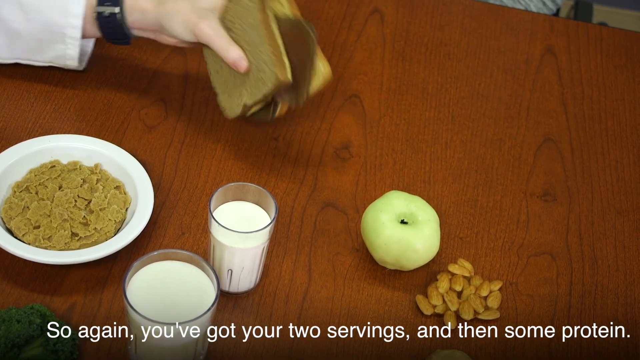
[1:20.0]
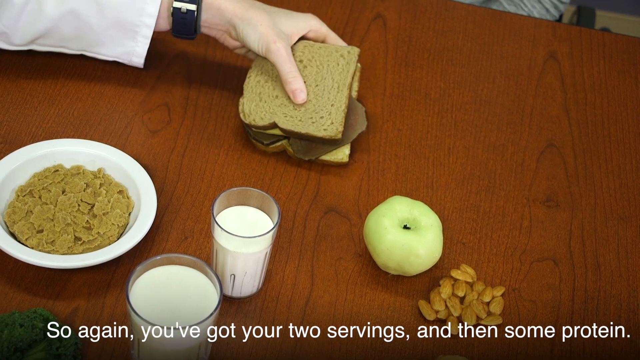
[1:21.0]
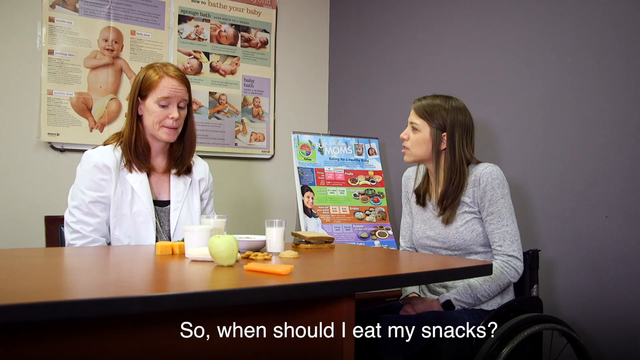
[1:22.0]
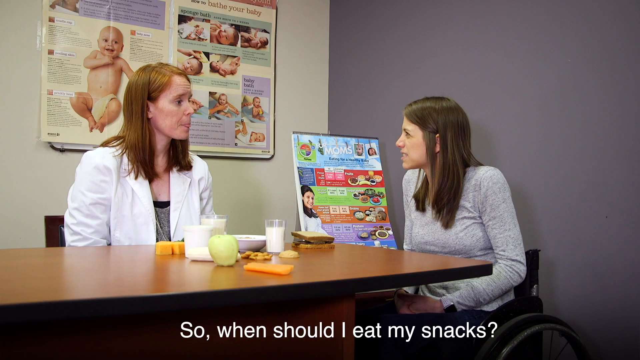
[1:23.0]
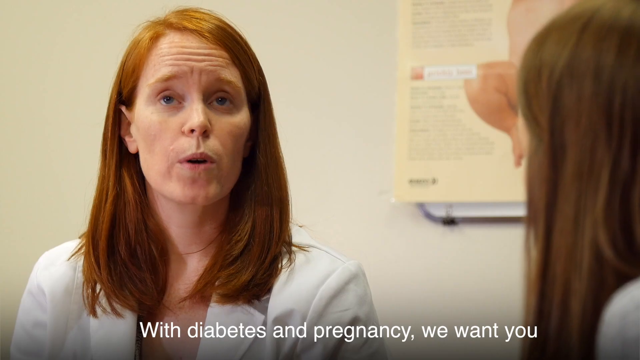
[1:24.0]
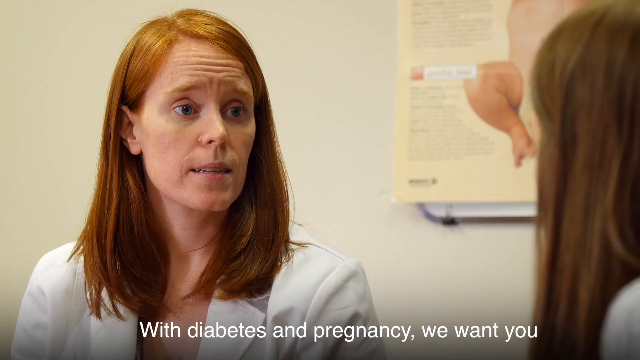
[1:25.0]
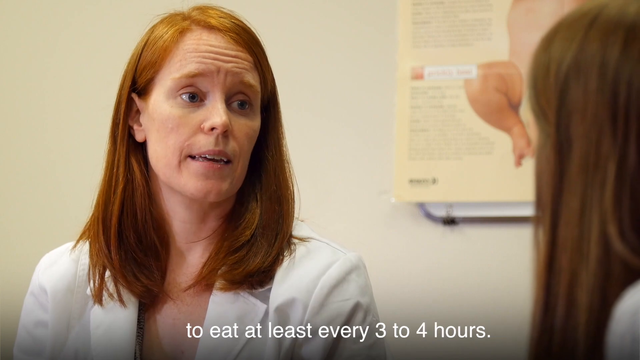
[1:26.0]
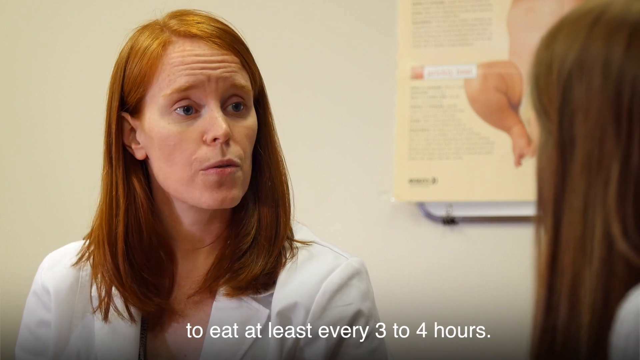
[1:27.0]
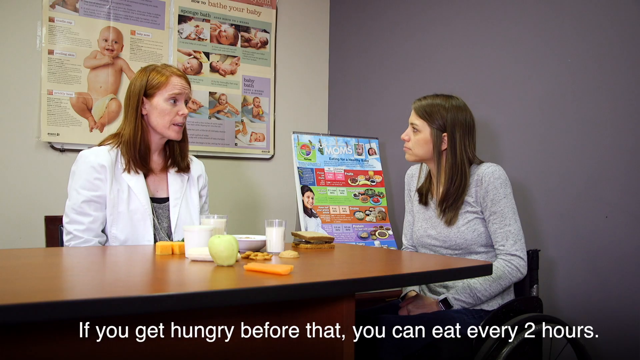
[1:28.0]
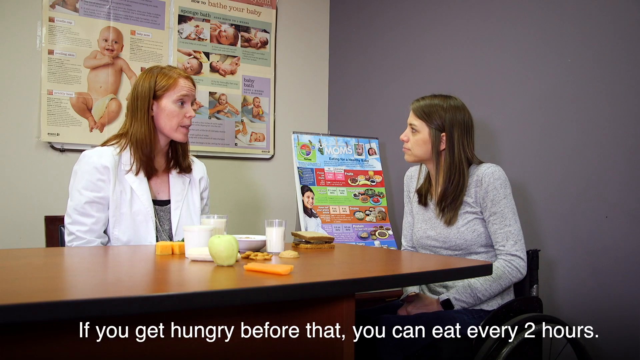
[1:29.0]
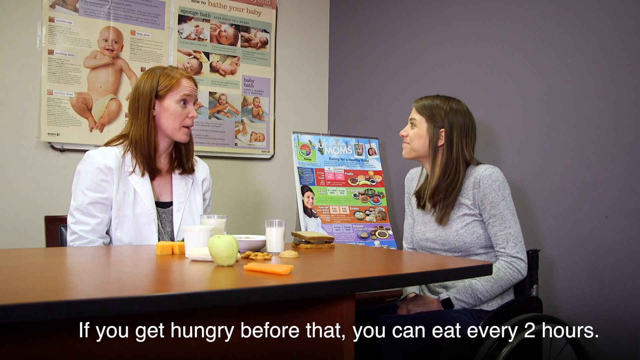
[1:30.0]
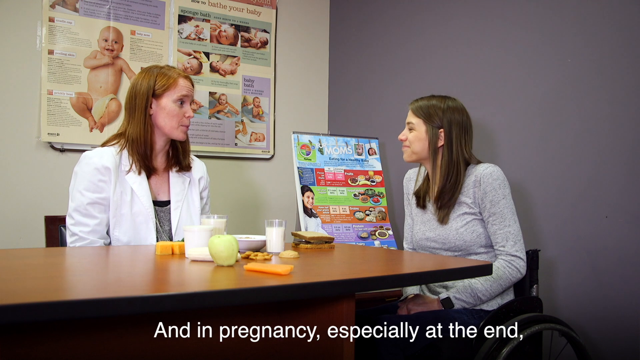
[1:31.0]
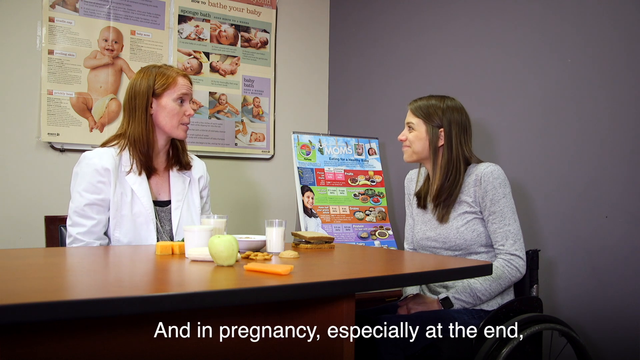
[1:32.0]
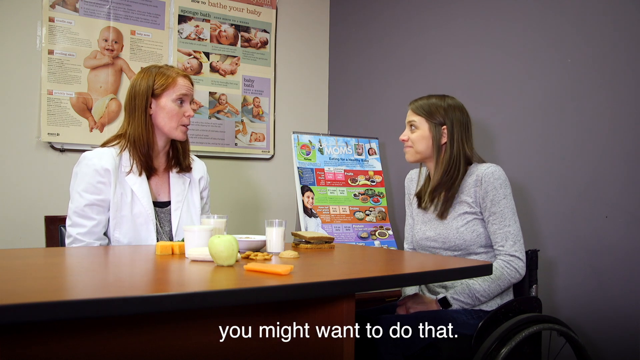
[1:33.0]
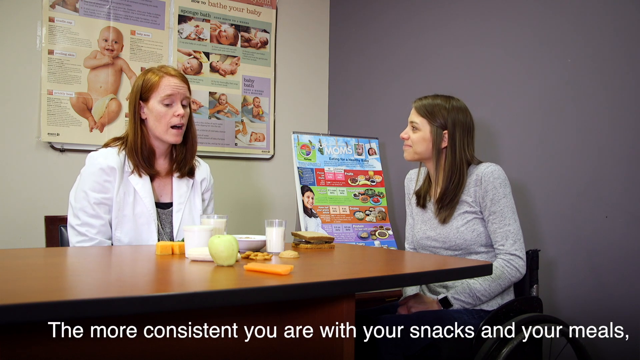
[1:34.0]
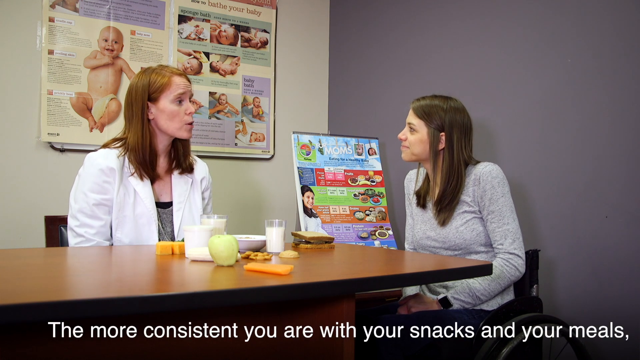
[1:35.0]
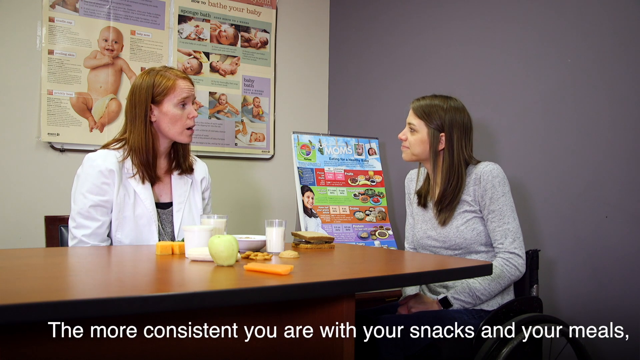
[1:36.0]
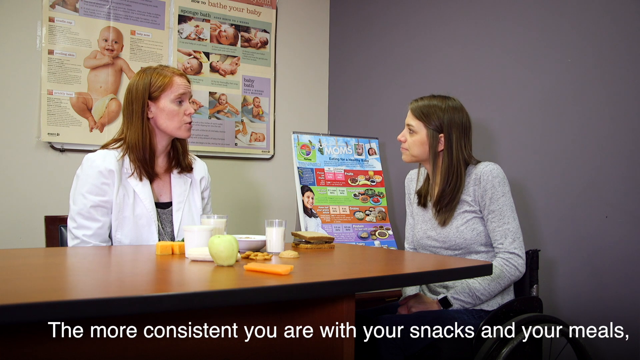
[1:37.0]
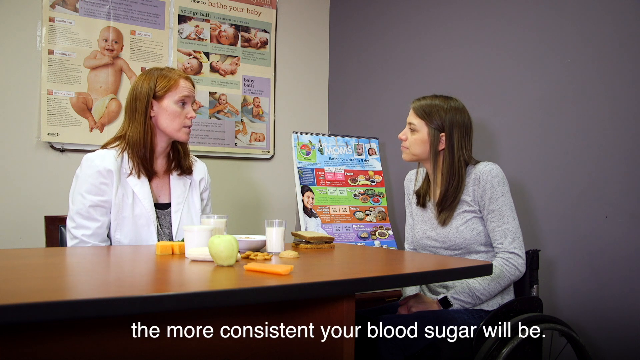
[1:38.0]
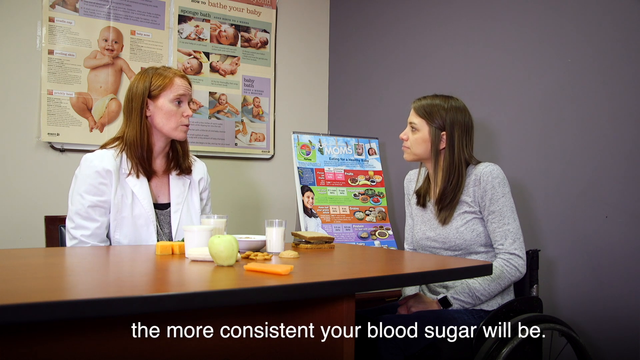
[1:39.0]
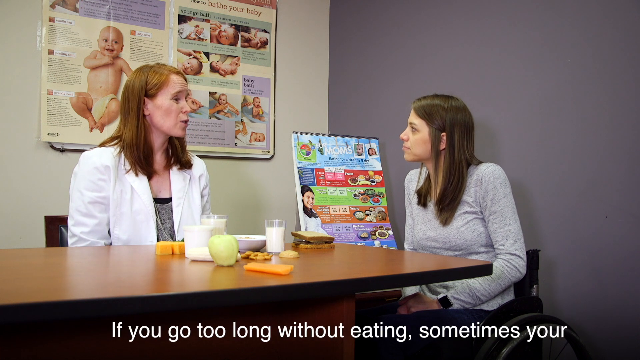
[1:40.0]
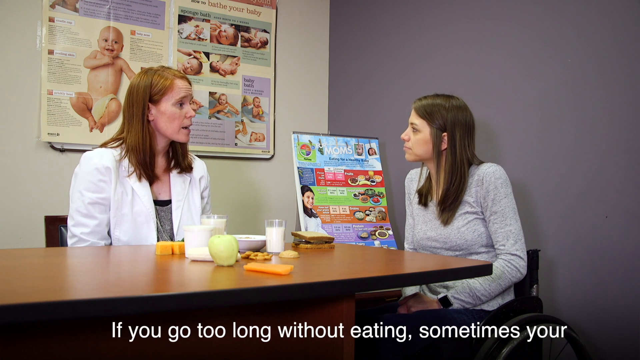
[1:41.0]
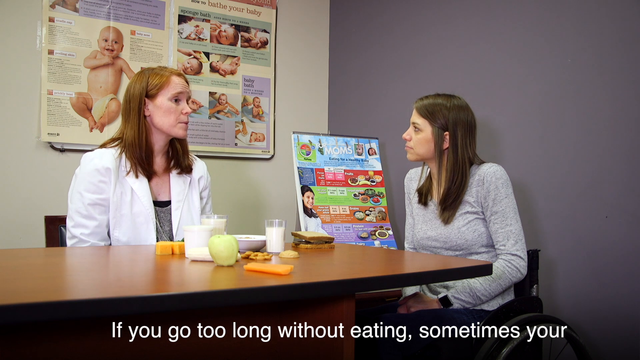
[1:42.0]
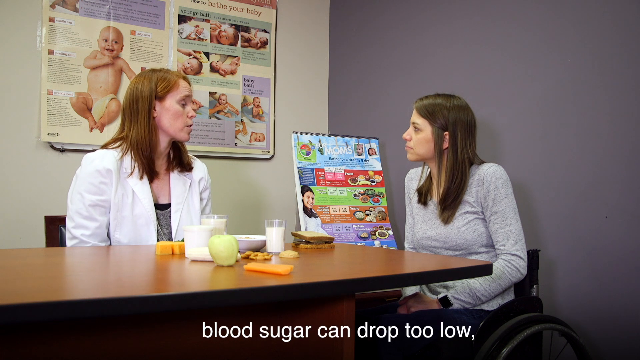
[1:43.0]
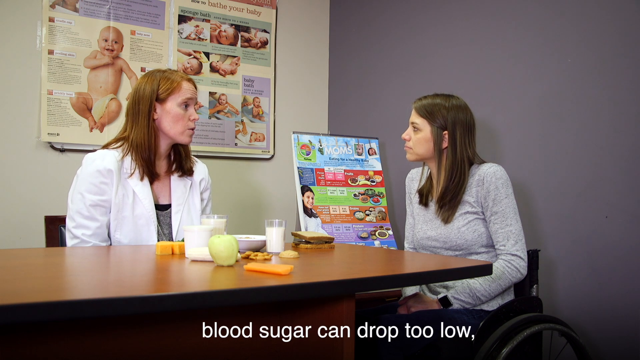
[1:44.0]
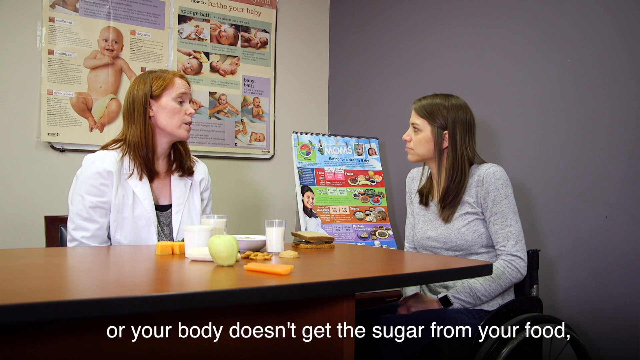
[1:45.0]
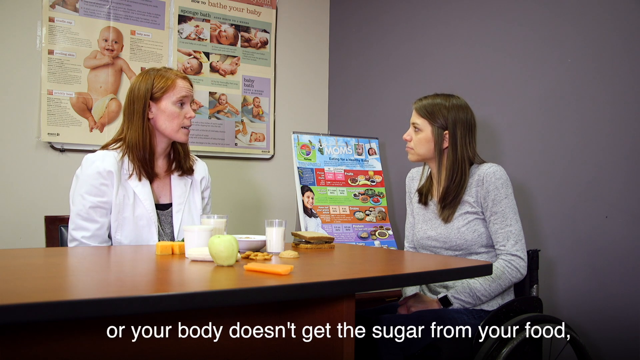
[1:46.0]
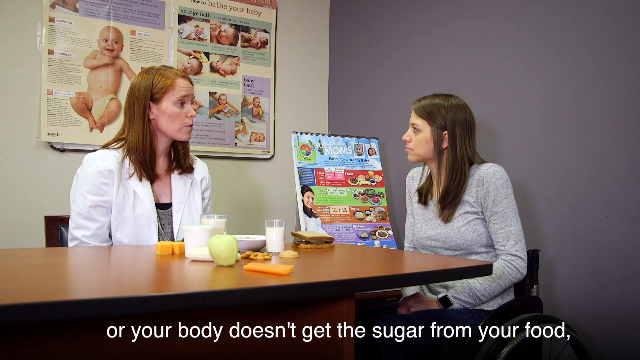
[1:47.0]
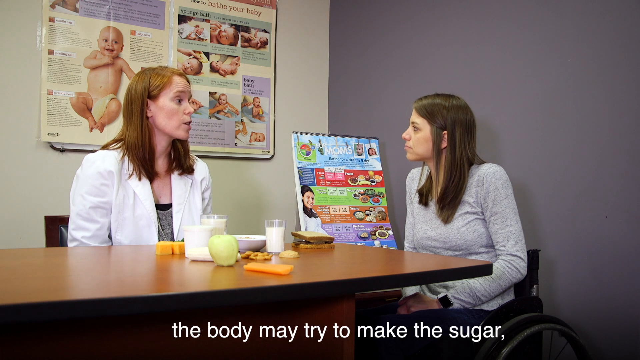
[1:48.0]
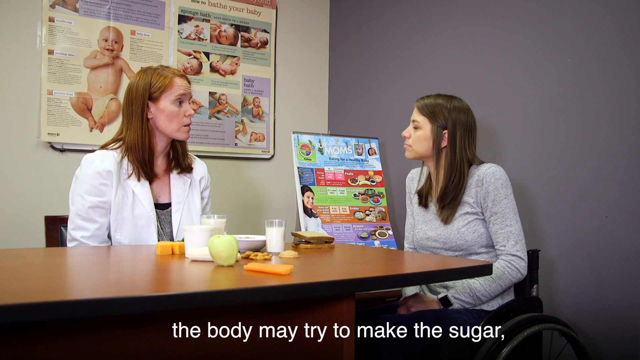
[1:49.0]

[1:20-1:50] The doctor or nutritionist and the patient continue their talk about food, using the examples set up on the table, which look very realistic but apparently fake. The food includes apples, nuts, milk, bowls of cereal, and bread with different cheeses and meats. The patient asks when she should eat her snacks with diabetes and pregnancy, and the doctor says to eat at least every three to four hours, or every two hours if hungry, and that going too long without eating can make blood sugar drop too low.